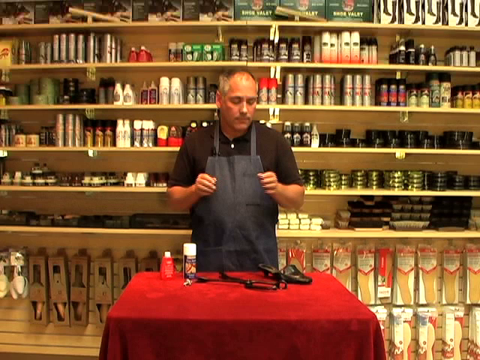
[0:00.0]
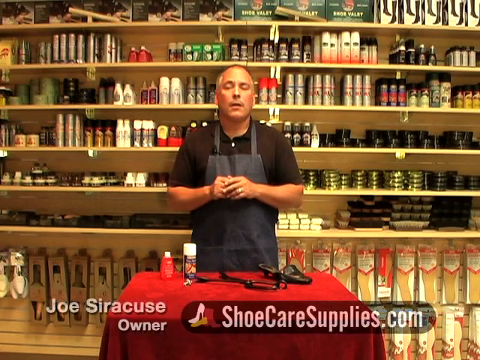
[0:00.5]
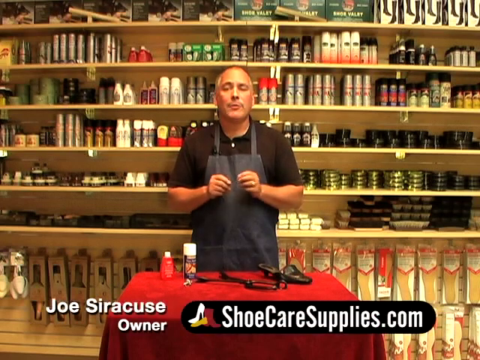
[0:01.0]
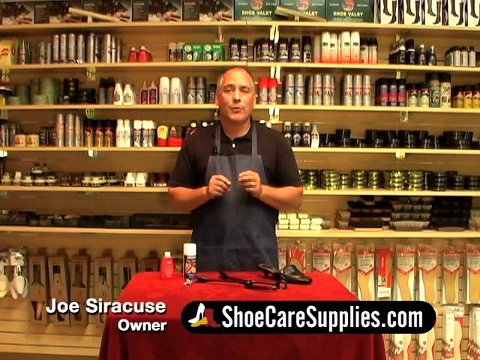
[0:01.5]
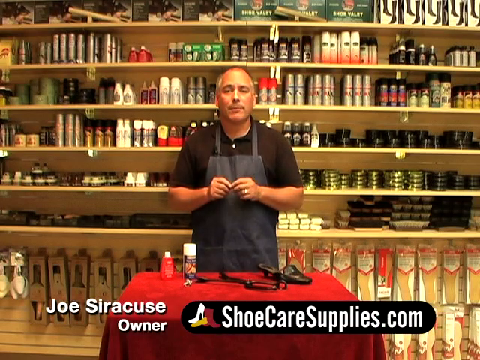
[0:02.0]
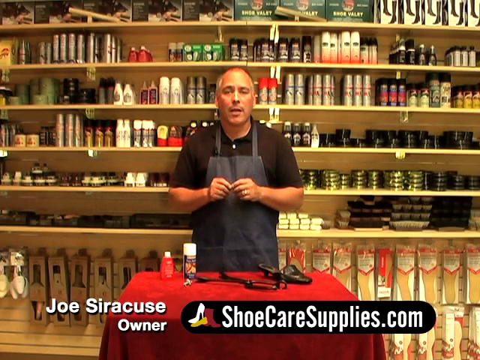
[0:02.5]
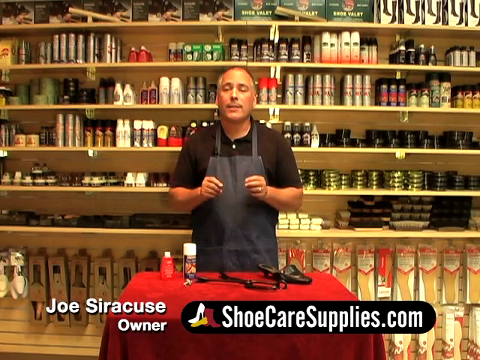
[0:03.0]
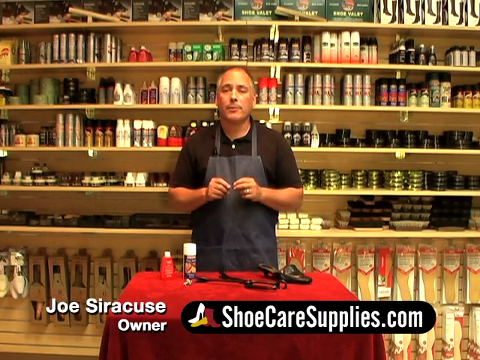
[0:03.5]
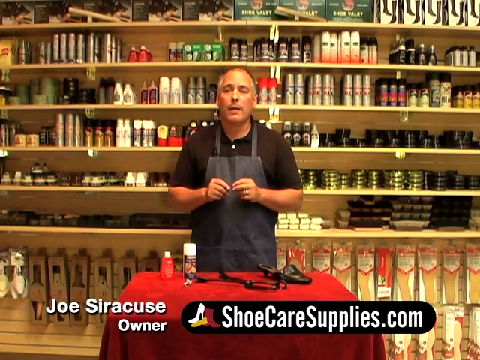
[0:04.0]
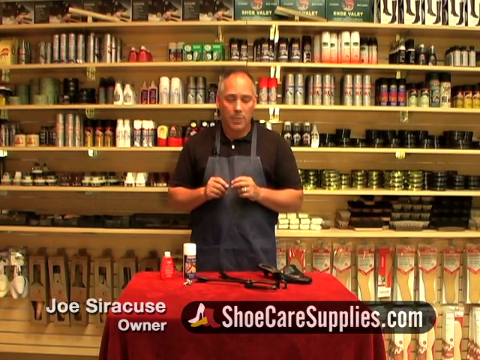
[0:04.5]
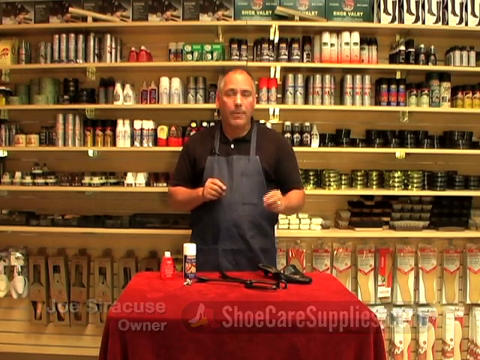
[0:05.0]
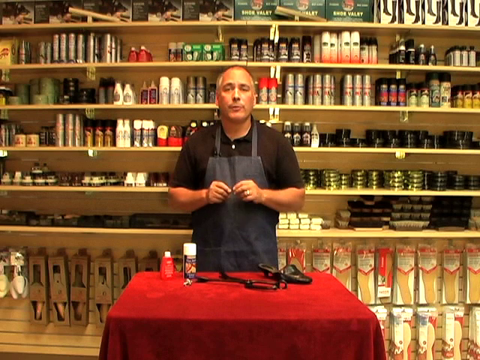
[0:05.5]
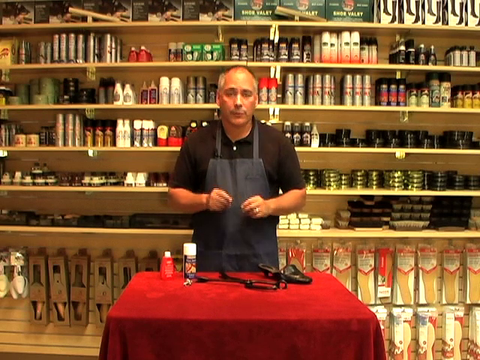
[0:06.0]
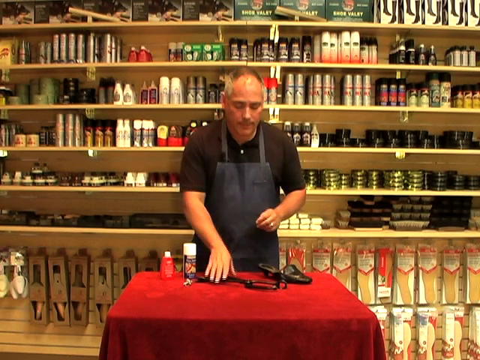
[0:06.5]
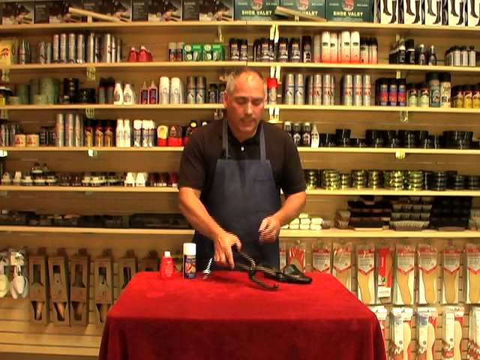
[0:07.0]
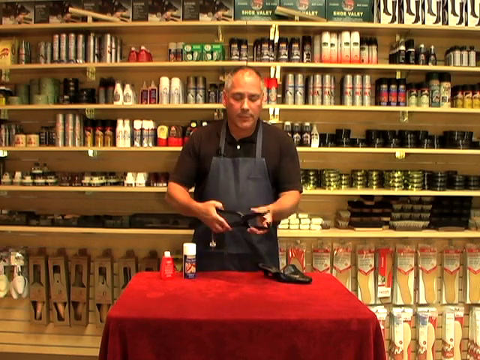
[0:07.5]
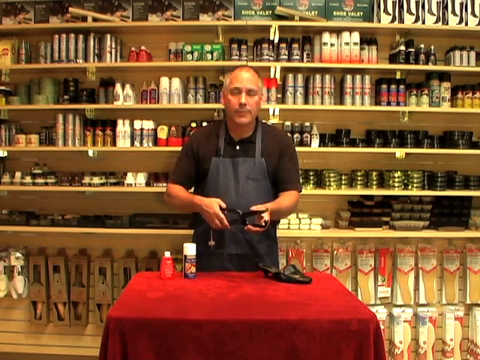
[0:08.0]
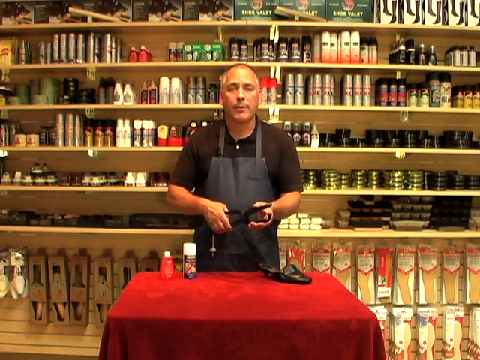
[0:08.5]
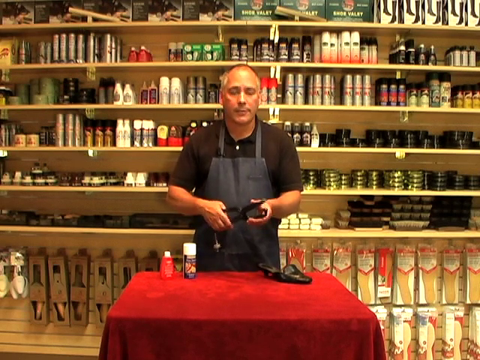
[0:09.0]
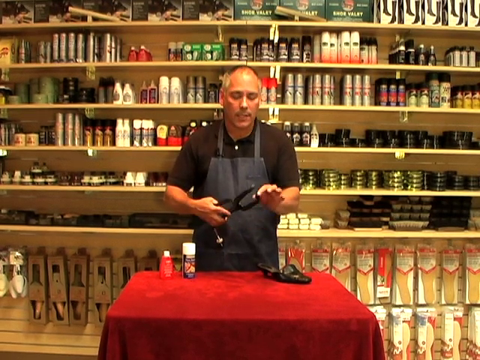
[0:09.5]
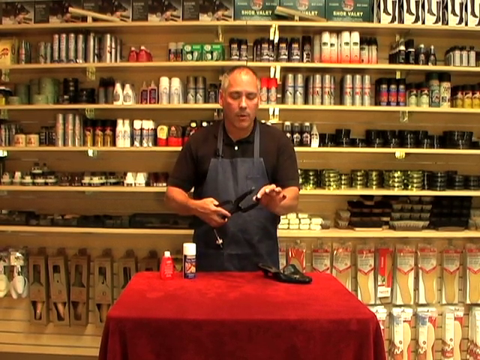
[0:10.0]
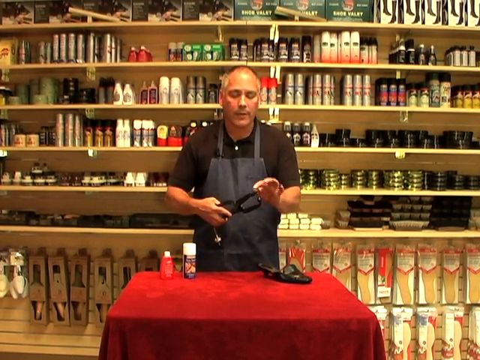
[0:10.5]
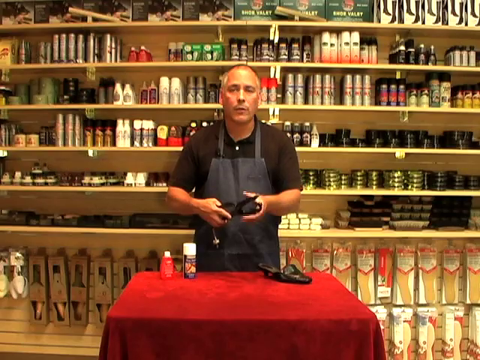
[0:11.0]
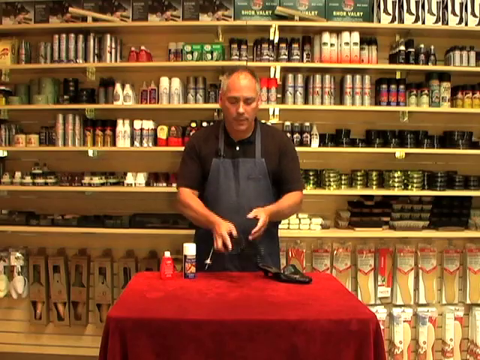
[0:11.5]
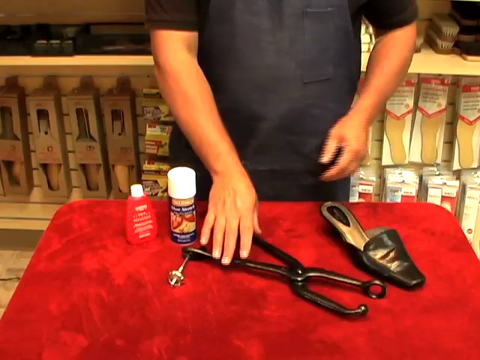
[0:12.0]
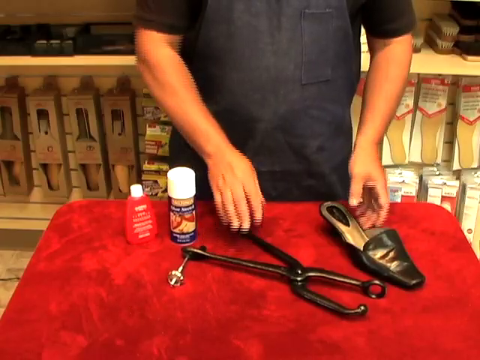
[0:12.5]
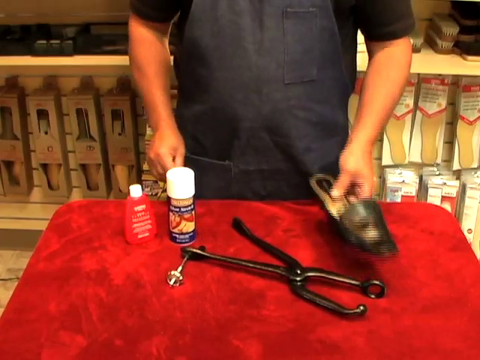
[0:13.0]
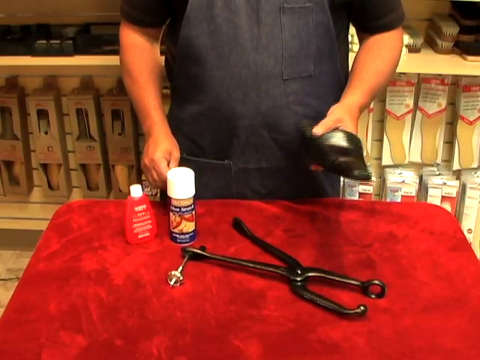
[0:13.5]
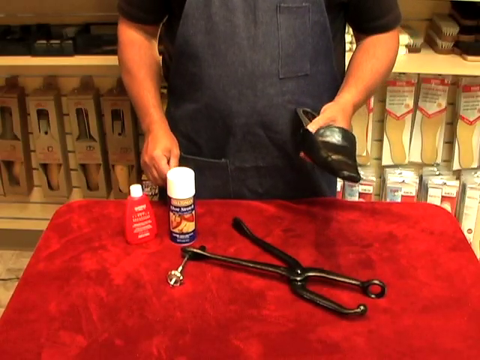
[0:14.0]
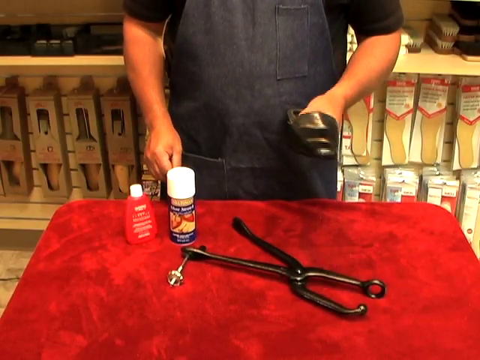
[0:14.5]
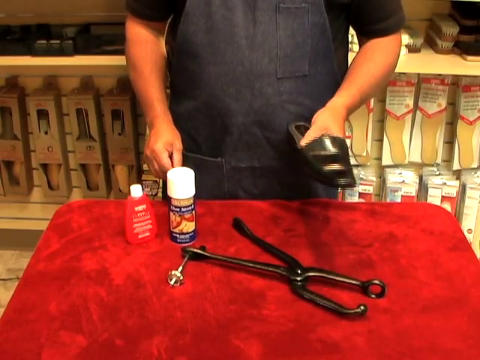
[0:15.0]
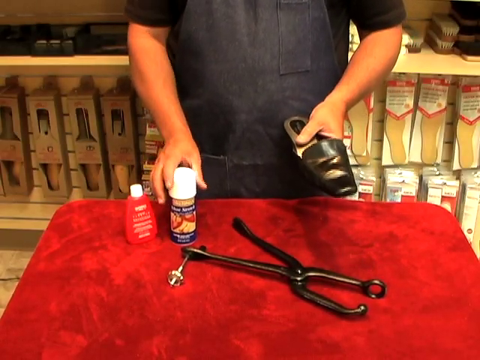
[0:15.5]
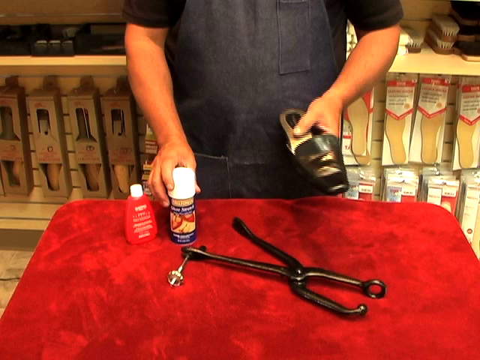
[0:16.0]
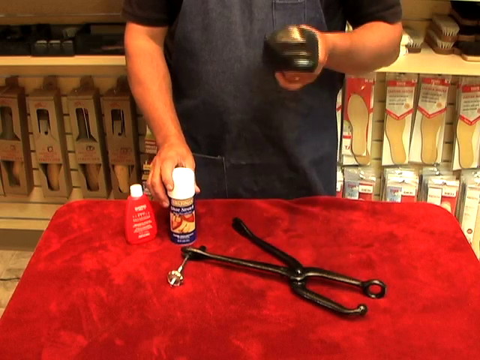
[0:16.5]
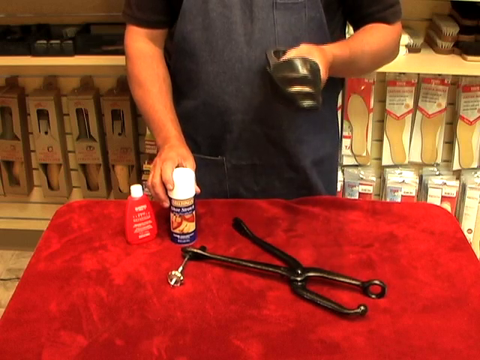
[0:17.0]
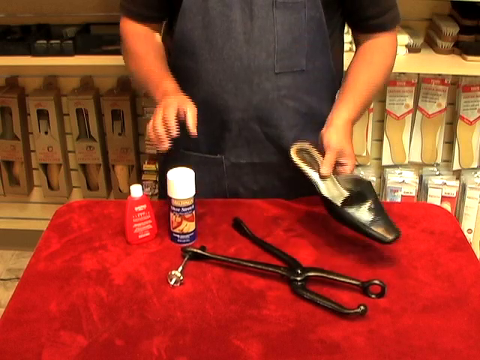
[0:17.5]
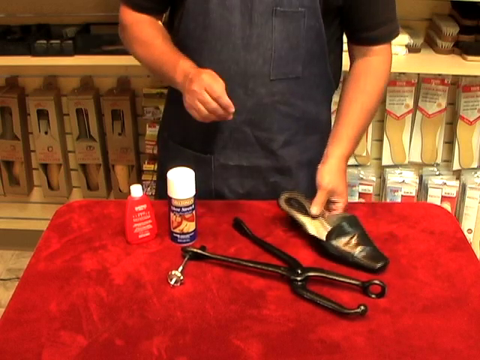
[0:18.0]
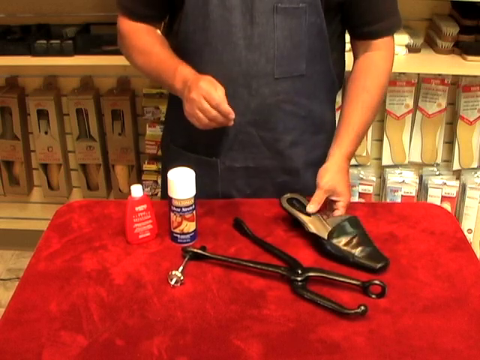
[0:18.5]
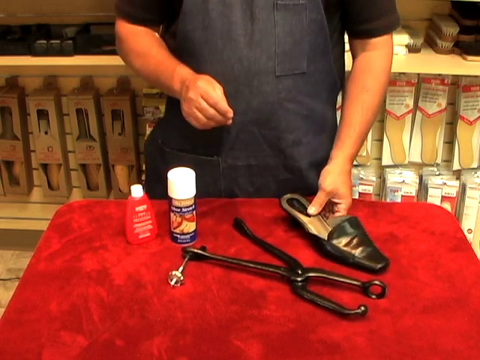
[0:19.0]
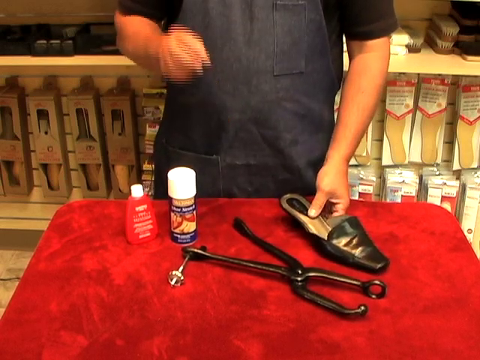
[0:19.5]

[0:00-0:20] A man with a bald head and minimal hair wears a black apron and a black T-shirt with one button at the neck. He stands before a table covered with a red towel. On top of it are two containers: one red and one blue with a white top; the red container also has a white top. A black shoe is on top of the table. In the background there are many packets of kiwi, which are shoe shiners. The company name is shoe care supplies.com. The man is explaining something, using his hands to gesture as he moves from point to point. He then points and picks a machine up from the table, and the camera zooms in to a black shoe that is not finished and is being worked on. The camera stays there, and he puts his right hand on top of the pocket and continues to explain something.